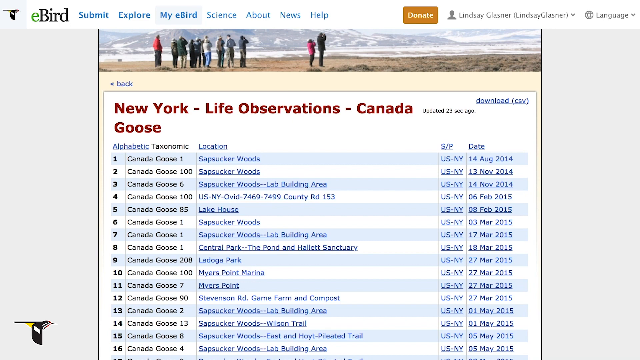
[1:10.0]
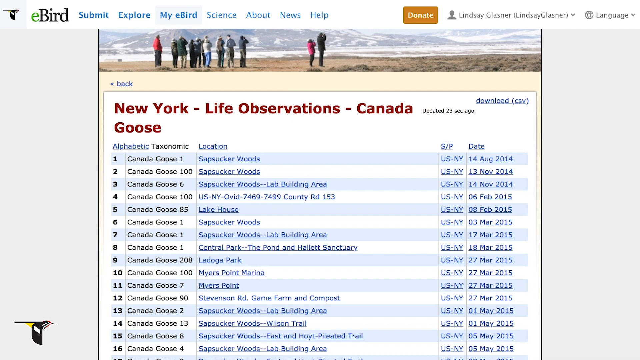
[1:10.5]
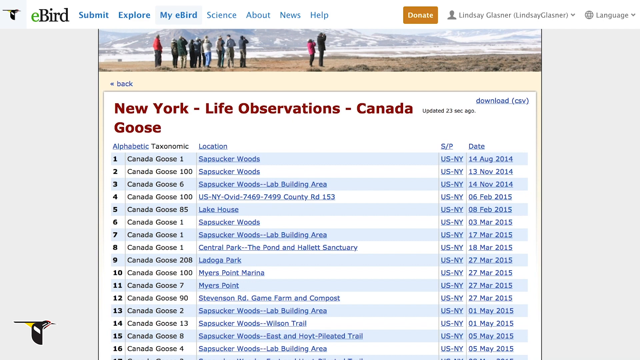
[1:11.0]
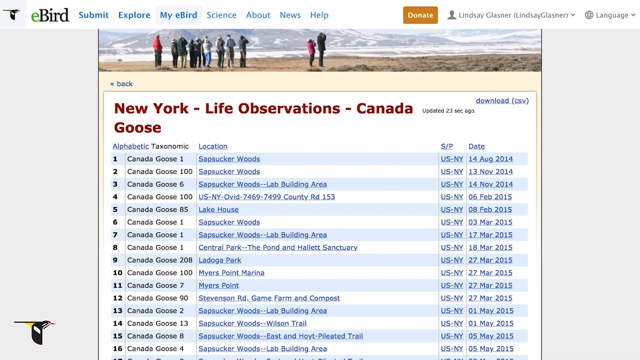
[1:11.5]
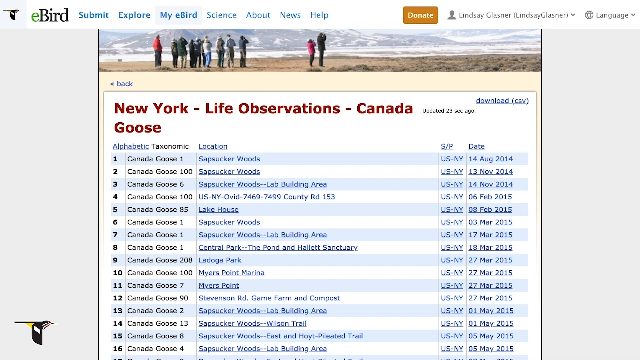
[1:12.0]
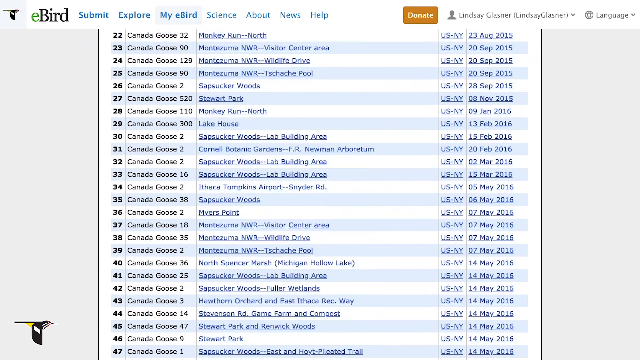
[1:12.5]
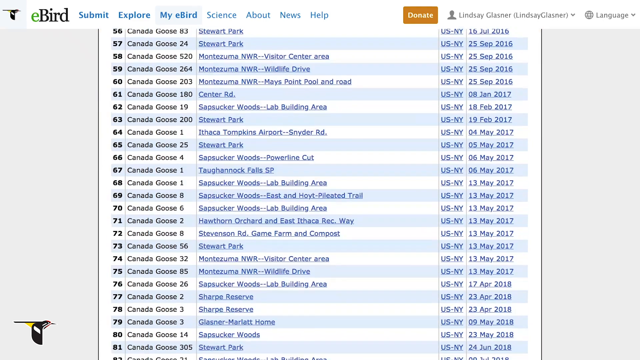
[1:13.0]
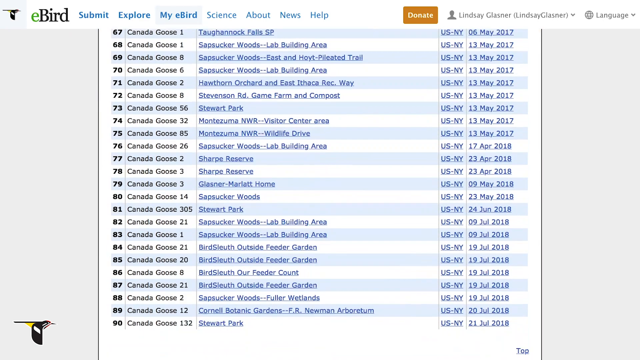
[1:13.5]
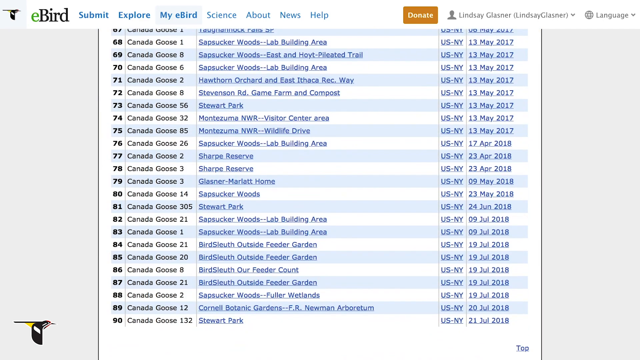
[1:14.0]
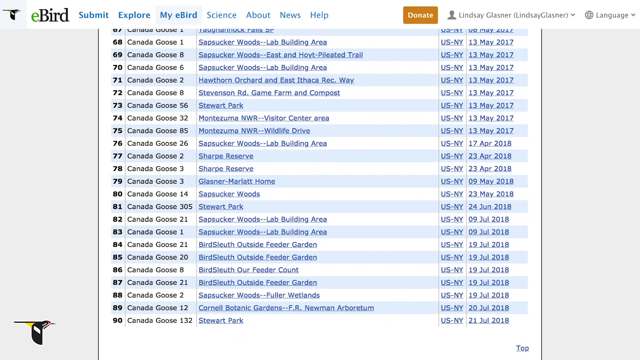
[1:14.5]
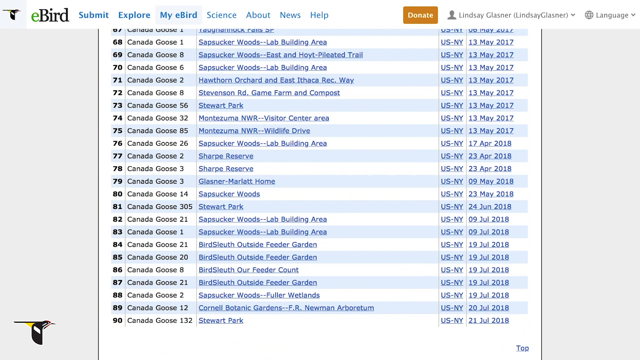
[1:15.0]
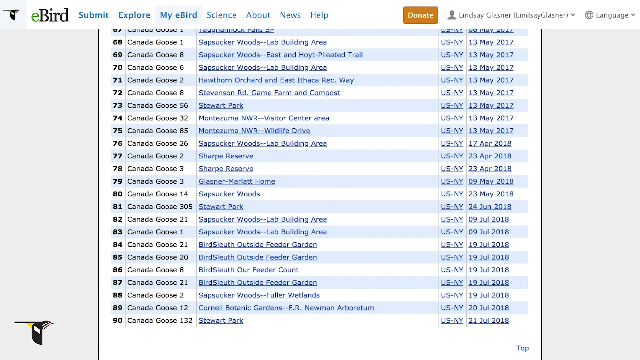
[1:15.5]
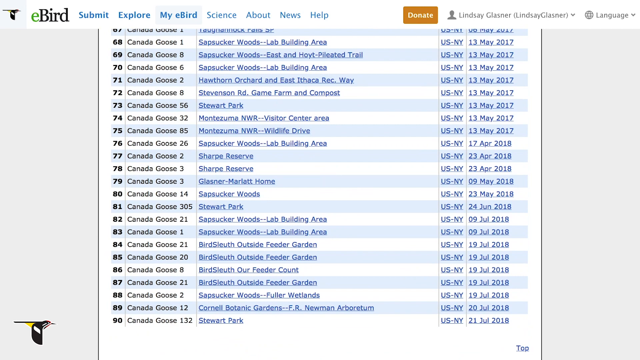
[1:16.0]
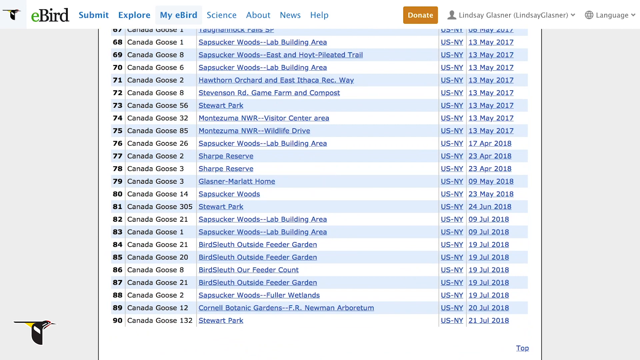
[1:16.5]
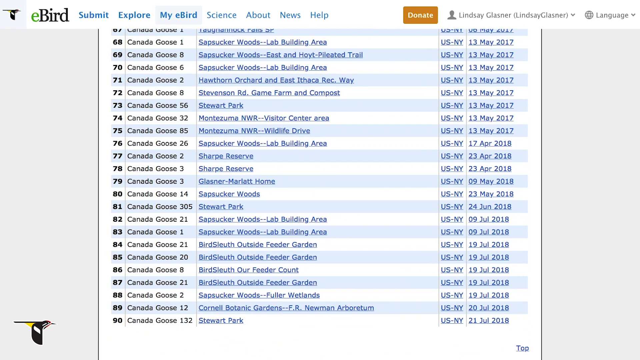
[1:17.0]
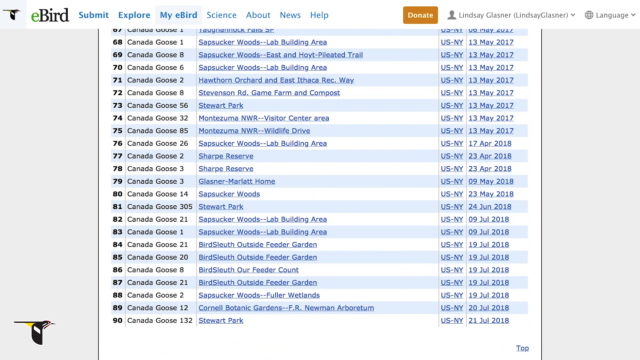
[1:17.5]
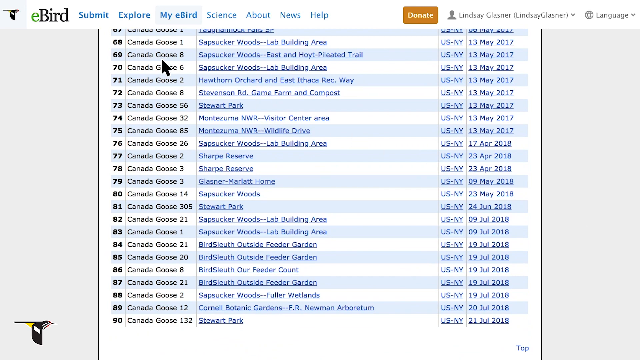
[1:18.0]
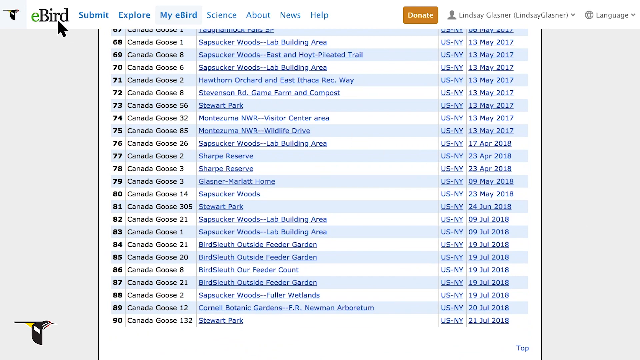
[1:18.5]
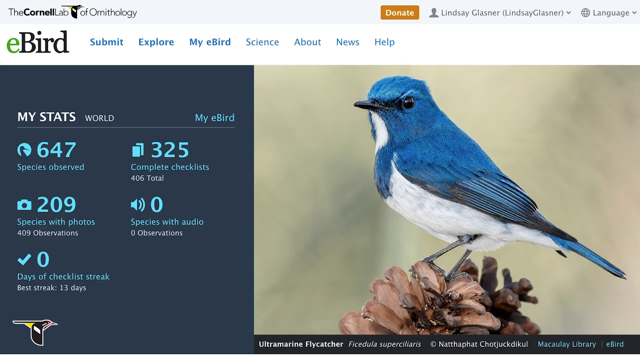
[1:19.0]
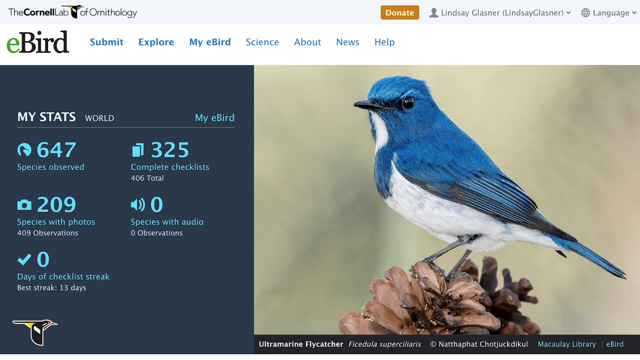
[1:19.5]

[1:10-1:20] The "View All" page for Canada goose opens, showing in big red letters above the sections "New York Life Observations Canada," with "Goose" beneath. Just to the right of "Canada," small black lettering says it was updated 23 seconds ago. The list is numbered 1 through 18 down the left side, with columns for the type of bird, location, S, P and date. The page scrolls far down, to the 80s. The view then returns to the main eBird page. Next to "eBird" in the top left are blue links: submit, explore, my eBird, science, about, news and help. Right above help is an orange donate button, followed by the profile icon, the name and a language dropdown on the right side. My stats is on the left again, with numbers and five sections. To the right is a little blue bird, its chest to the left, looking slightly toward the camera and sitting on a little acorn with its tail down to the right.